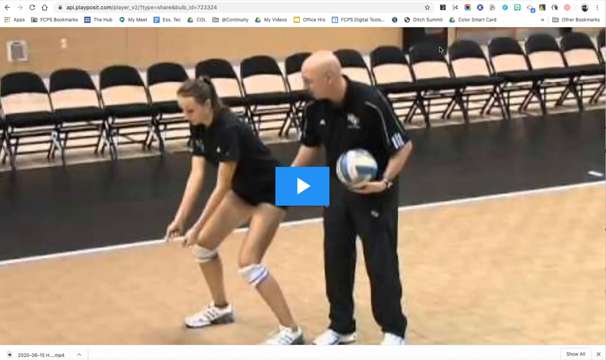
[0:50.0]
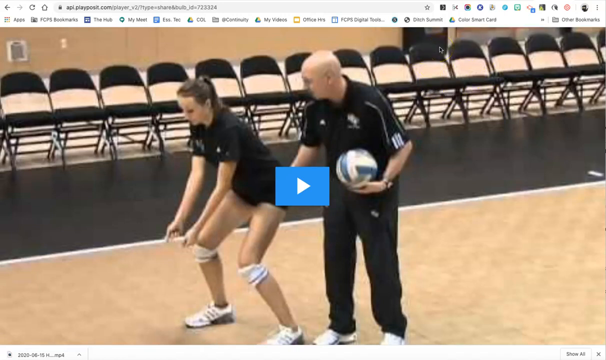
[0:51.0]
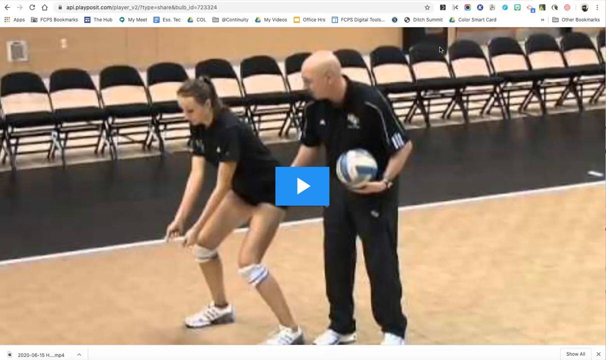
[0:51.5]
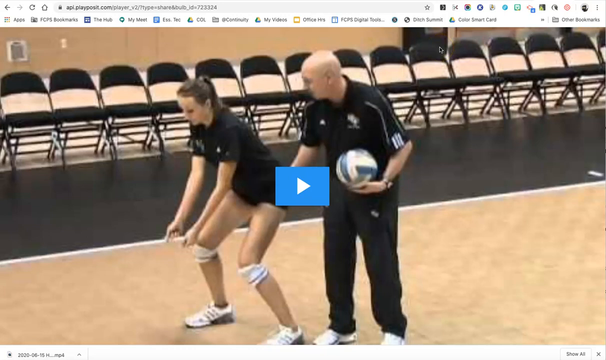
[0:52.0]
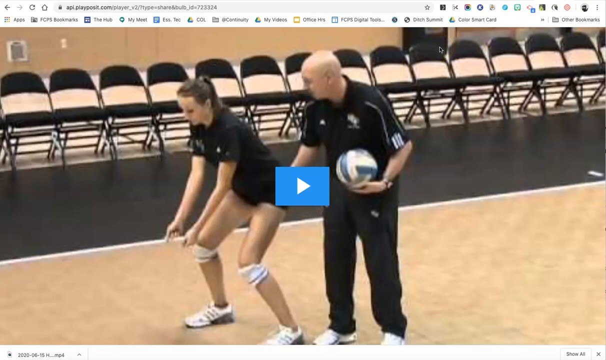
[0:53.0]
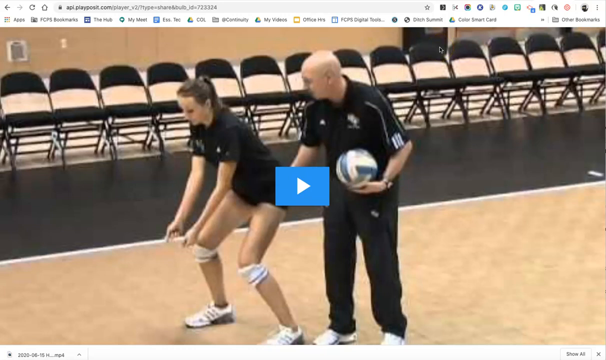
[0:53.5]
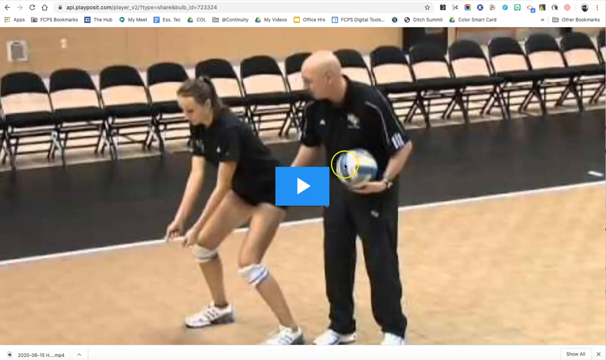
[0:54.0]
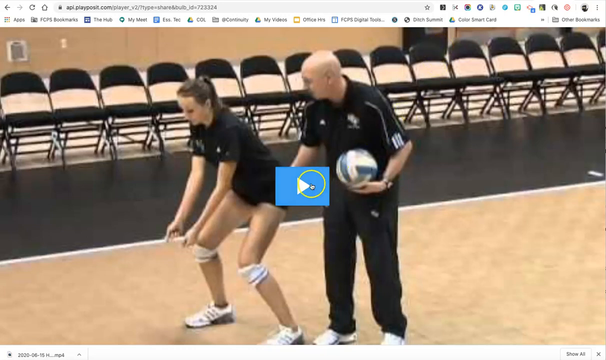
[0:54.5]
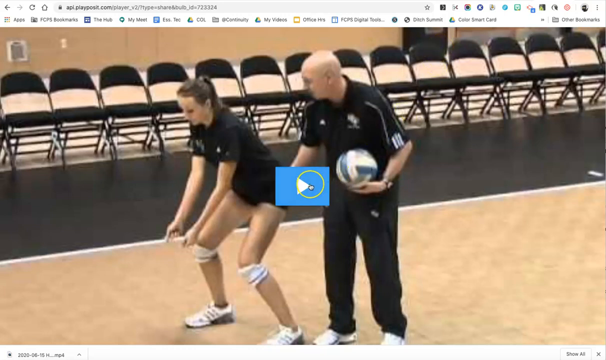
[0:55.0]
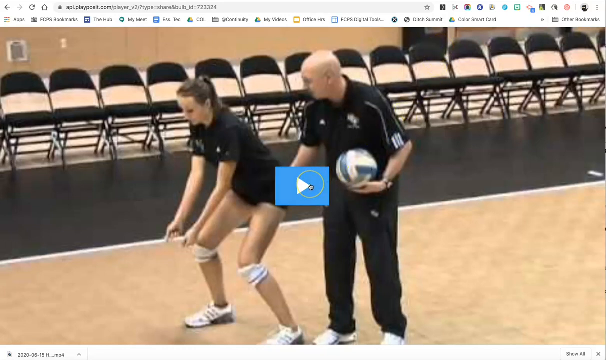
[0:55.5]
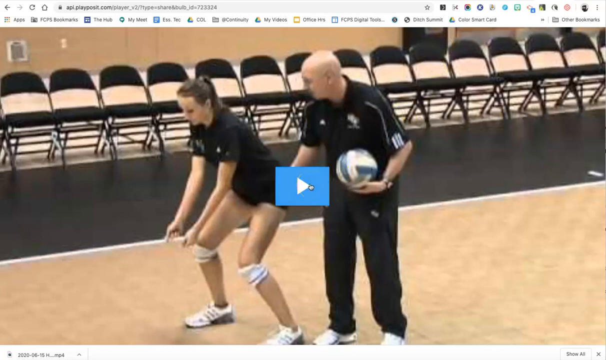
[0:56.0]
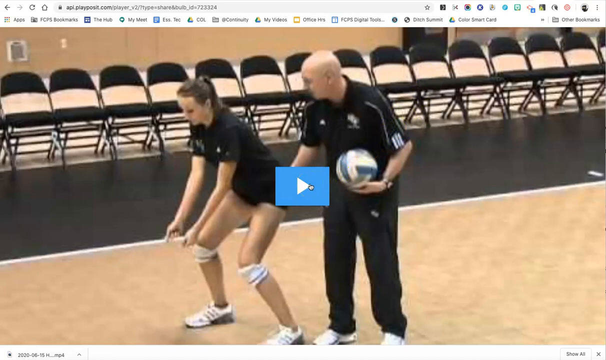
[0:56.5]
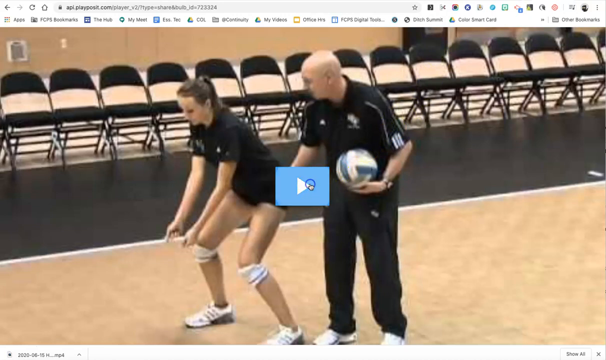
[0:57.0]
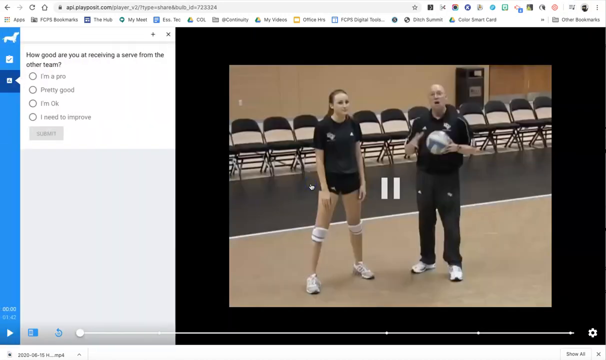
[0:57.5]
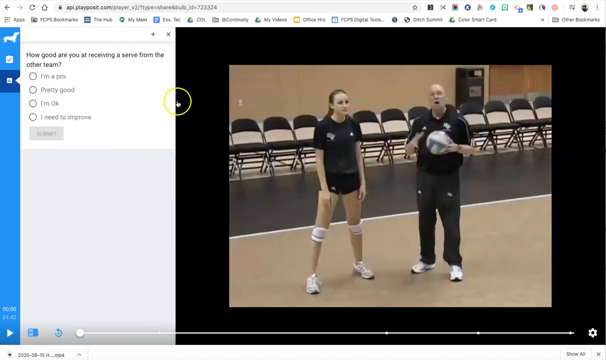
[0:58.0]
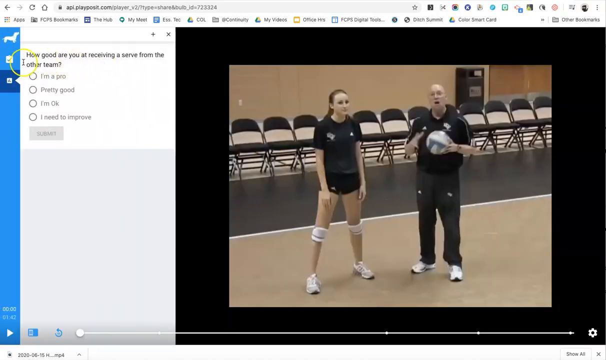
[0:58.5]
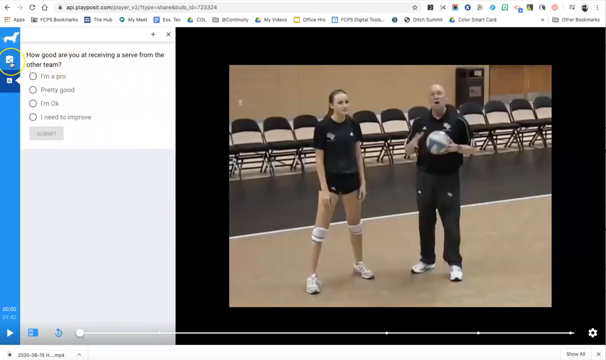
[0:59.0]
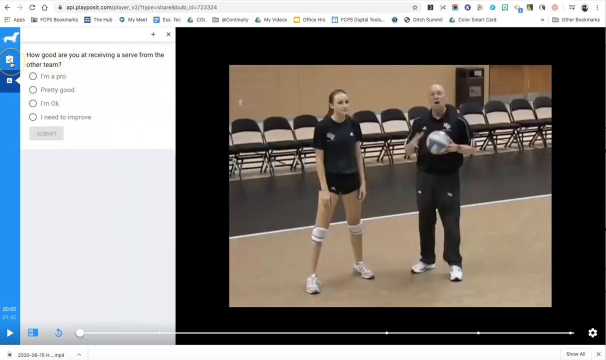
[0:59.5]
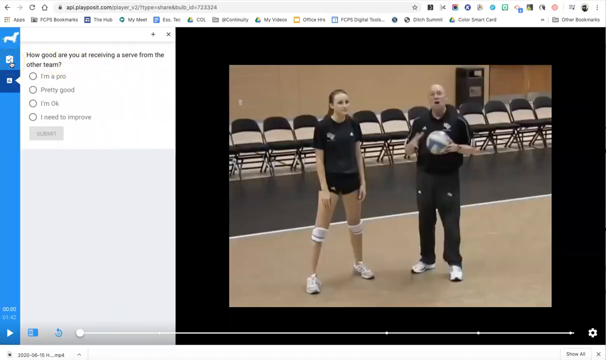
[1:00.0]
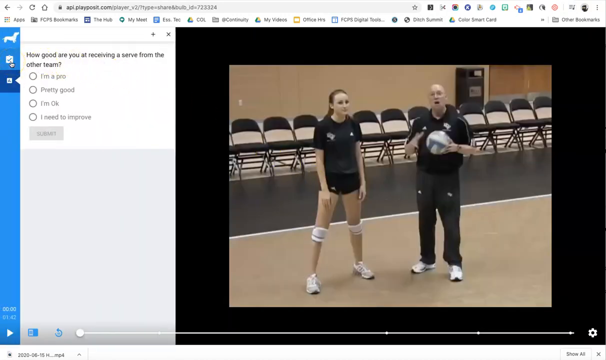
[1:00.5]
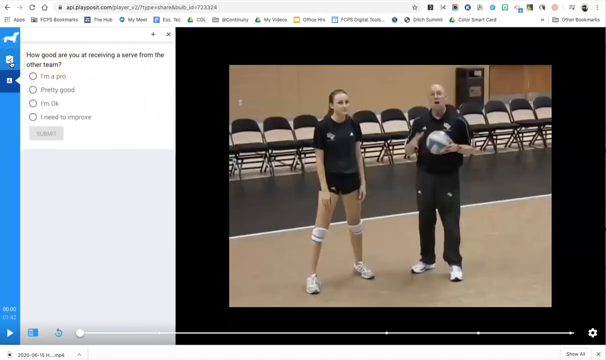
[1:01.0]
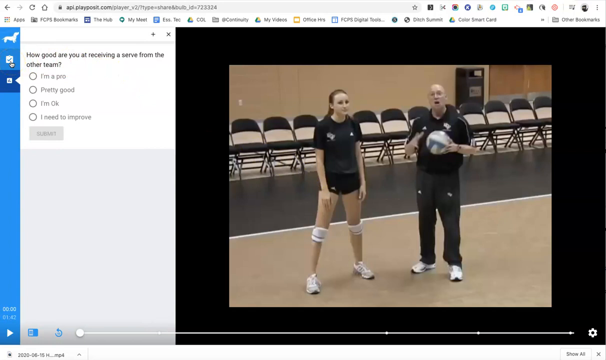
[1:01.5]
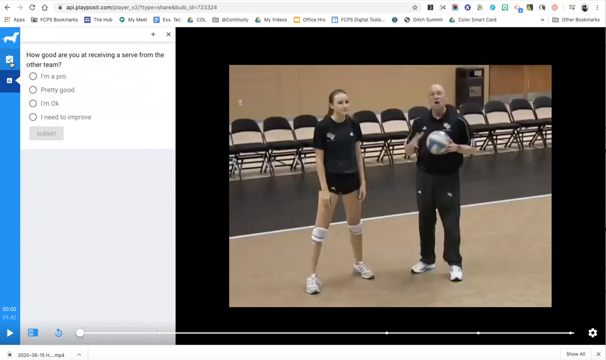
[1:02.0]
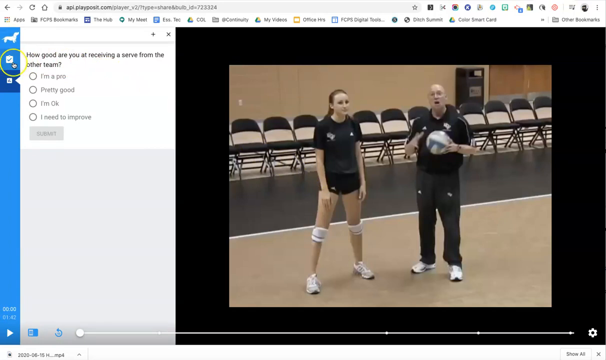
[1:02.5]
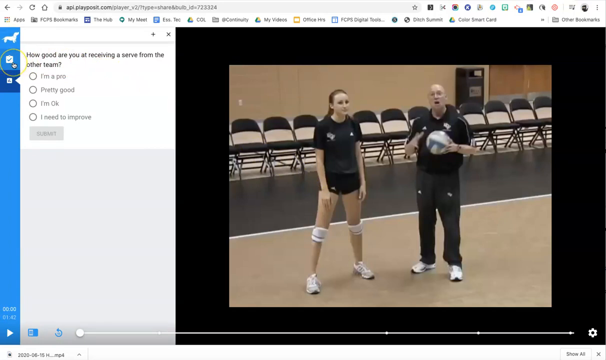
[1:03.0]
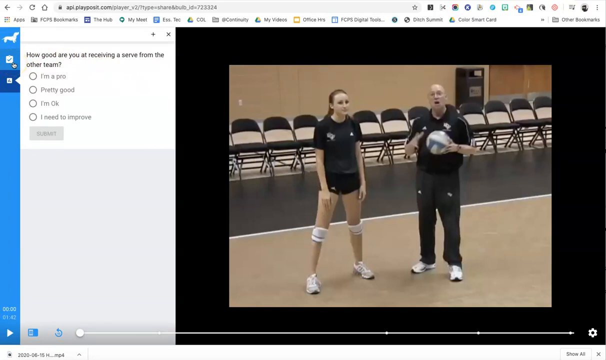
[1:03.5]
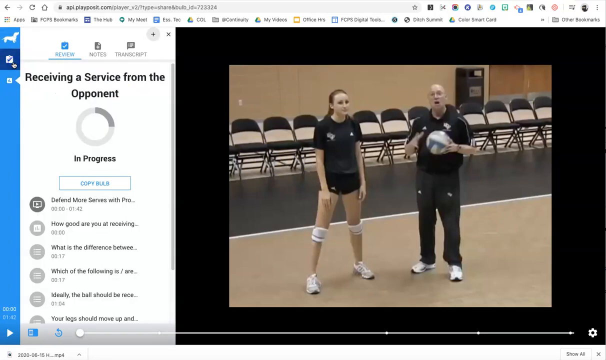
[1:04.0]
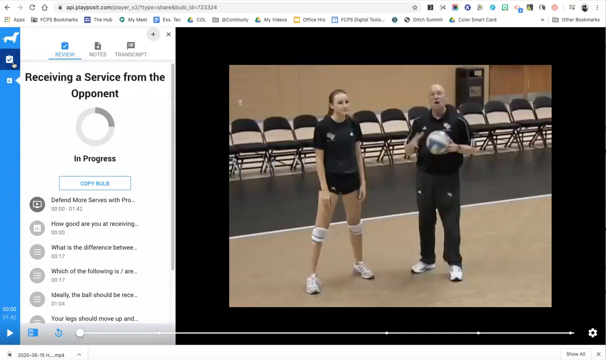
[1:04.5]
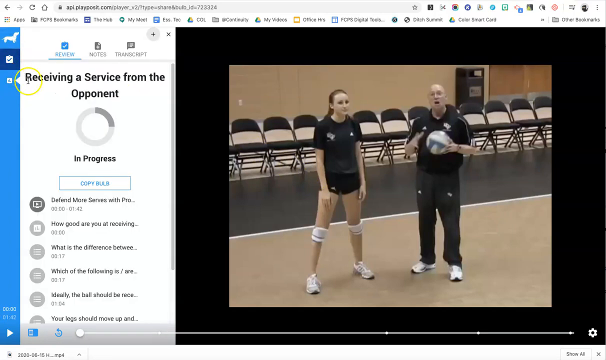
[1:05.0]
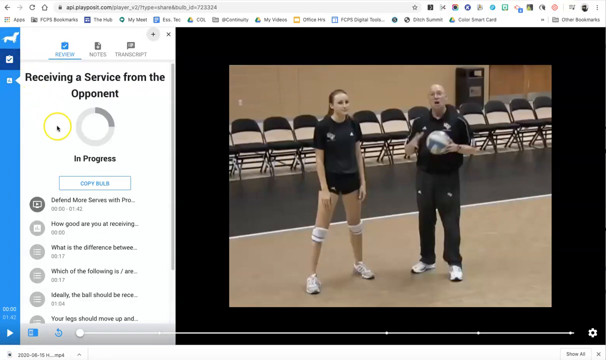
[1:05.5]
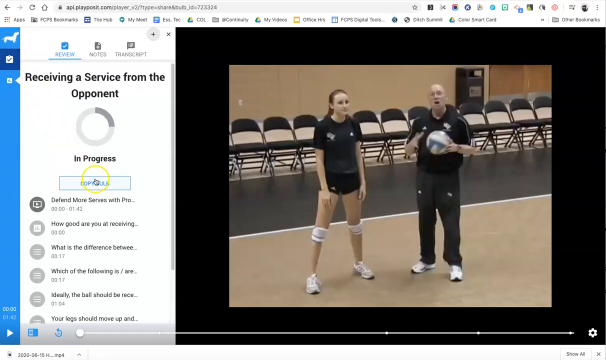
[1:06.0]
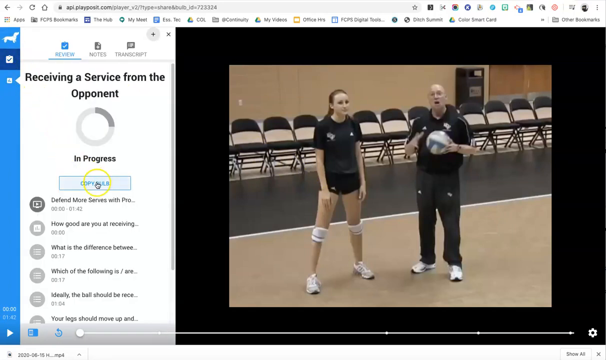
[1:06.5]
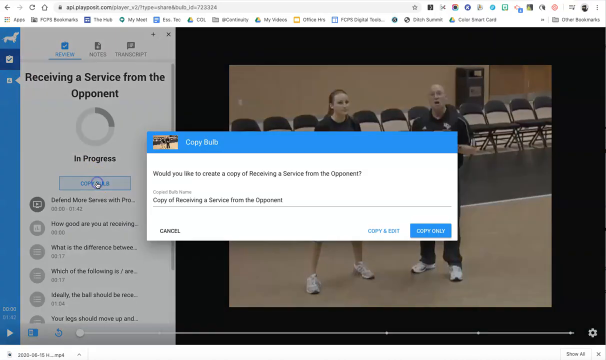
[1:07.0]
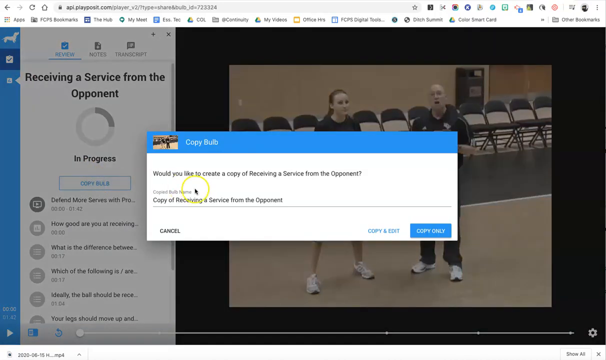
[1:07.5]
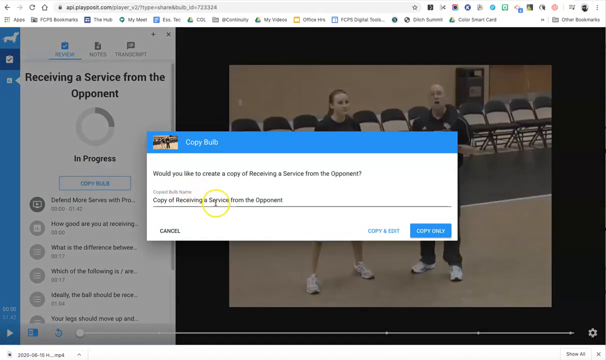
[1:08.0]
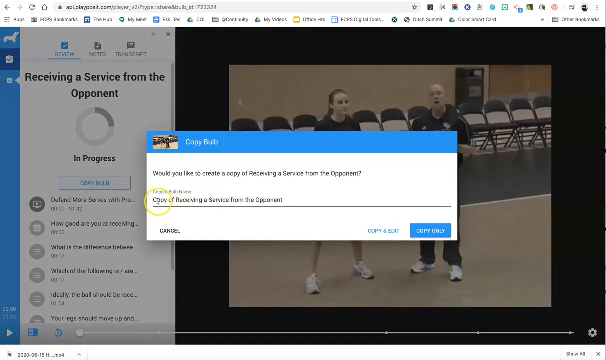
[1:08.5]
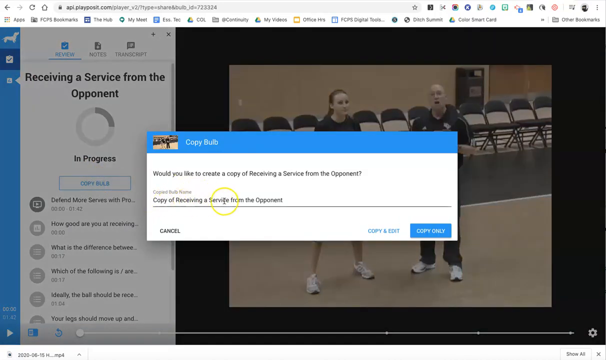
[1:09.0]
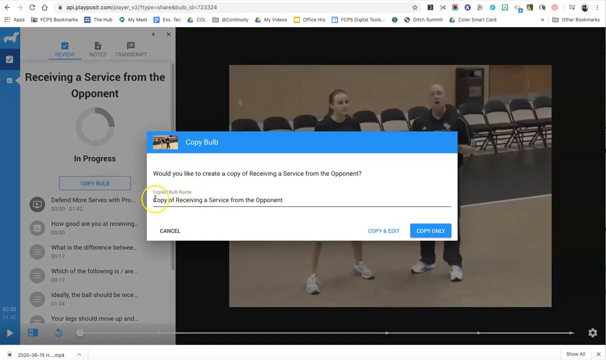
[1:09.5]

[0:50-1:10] What looks to be a coach and a young volleyball player, who appears to be maybe a high school teenager, are standing in a gymnasium and looking at the camera. Both wear black. The young woman has a black t-shirt, black volleyball shorts and white knee pads. The man who appears to be the coach is bald and wears a mainly black short-sleeve polo shirt with some white on it, and faded black pants that are not as sharp a black as the shirt. The gymnasium has a tan floor with a black border, and black folding chairs are around the gymnasium floor. The coach's mouth is hanging open and he holds a ball that looks like it is being thrown to him. The young player looks kind of not amused.